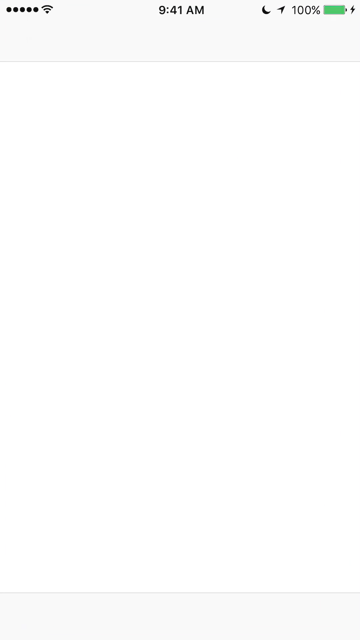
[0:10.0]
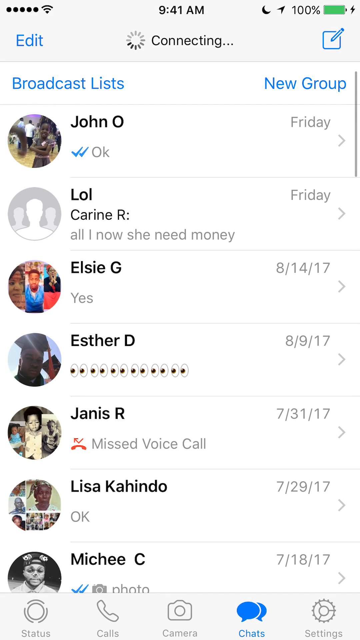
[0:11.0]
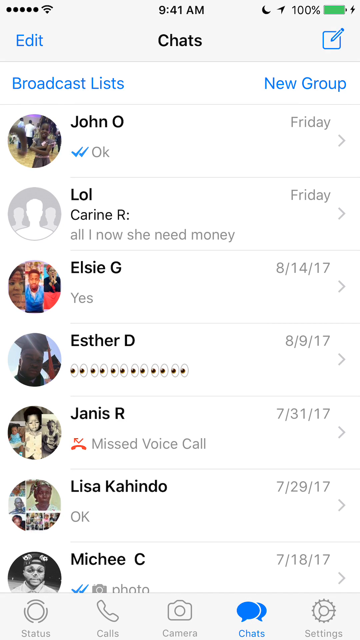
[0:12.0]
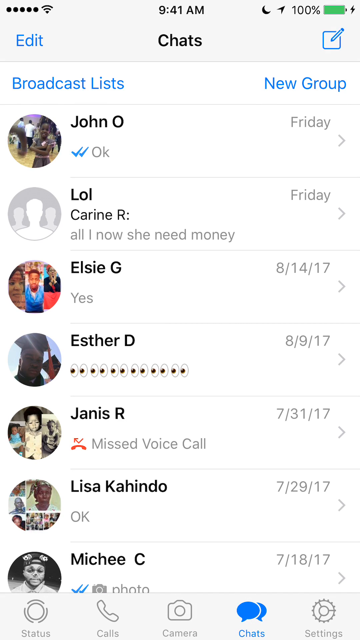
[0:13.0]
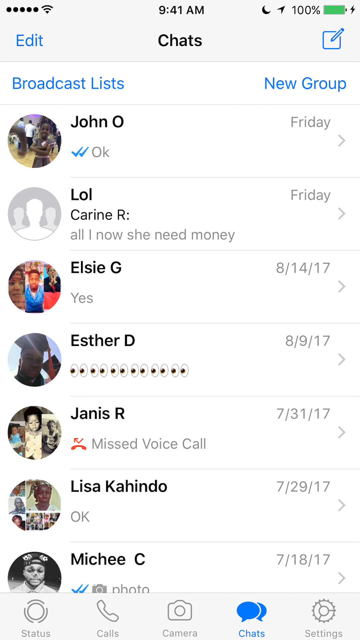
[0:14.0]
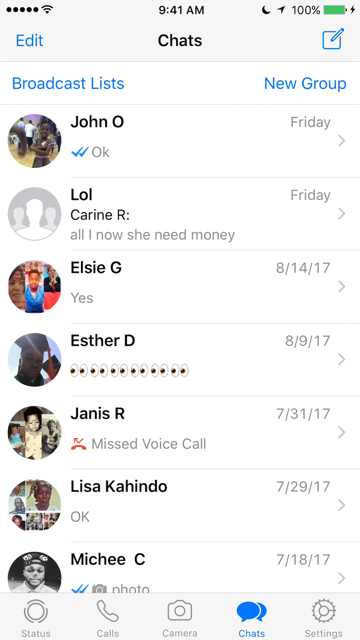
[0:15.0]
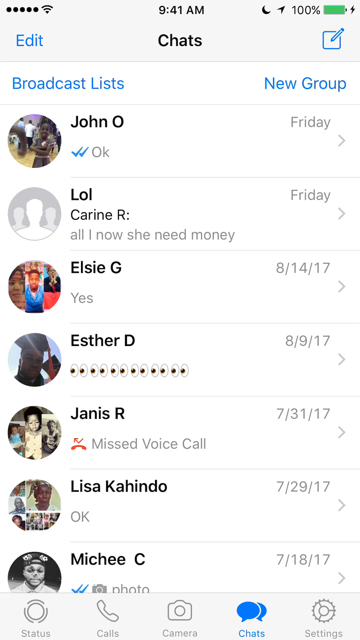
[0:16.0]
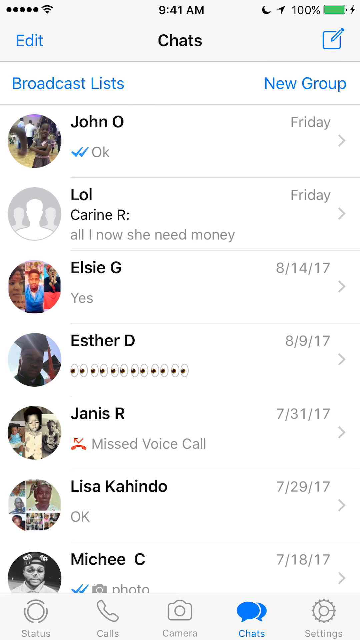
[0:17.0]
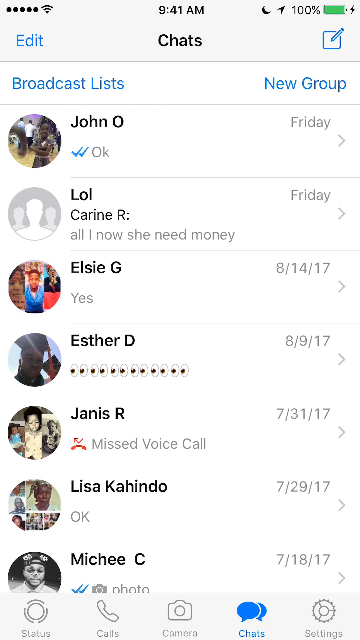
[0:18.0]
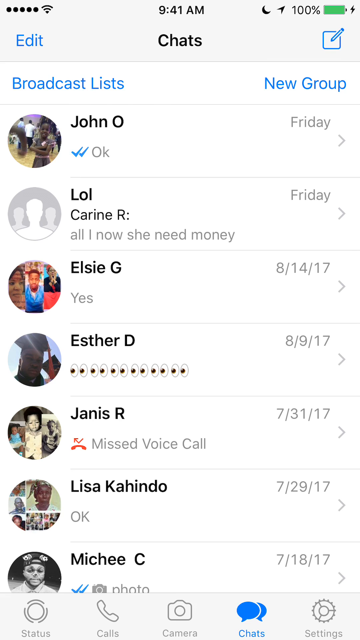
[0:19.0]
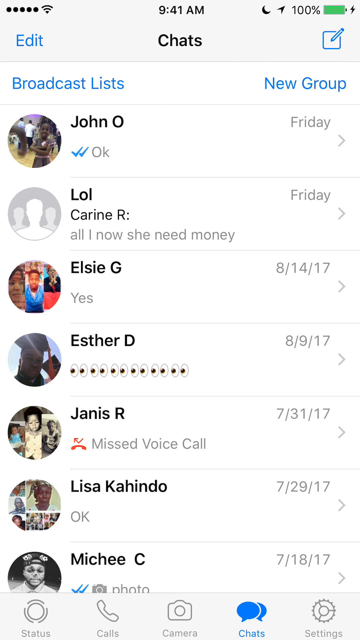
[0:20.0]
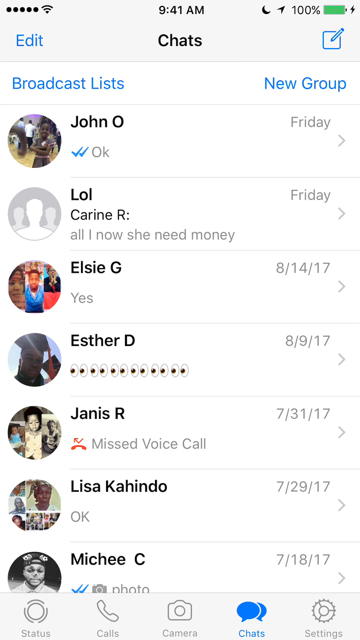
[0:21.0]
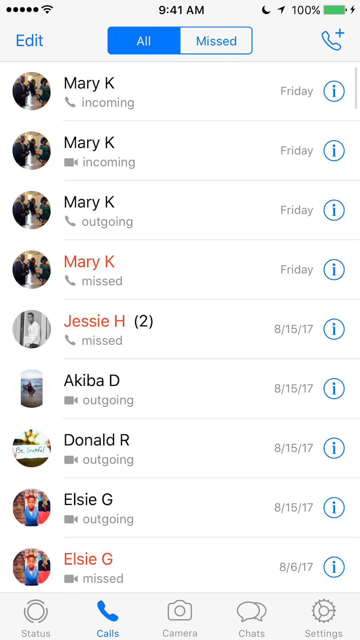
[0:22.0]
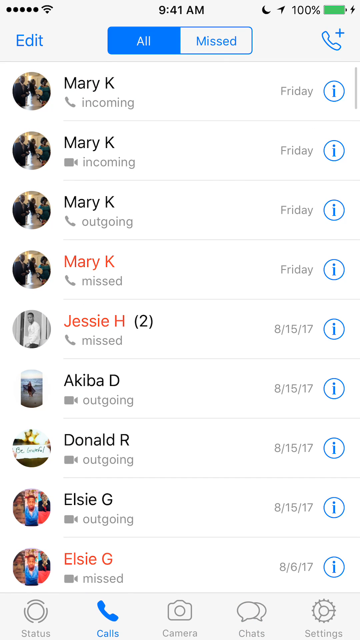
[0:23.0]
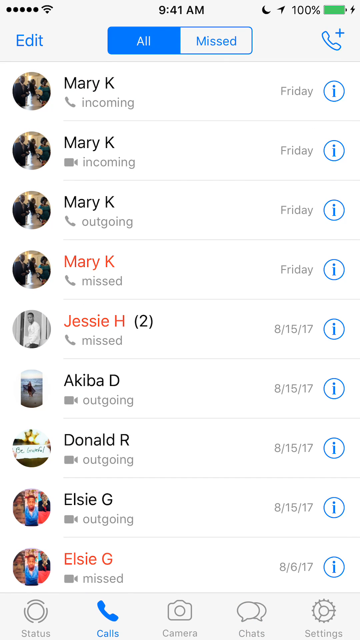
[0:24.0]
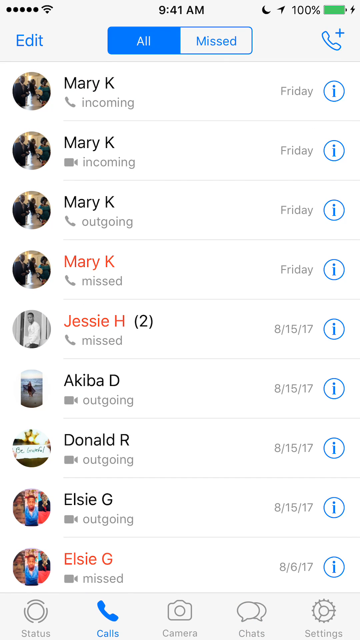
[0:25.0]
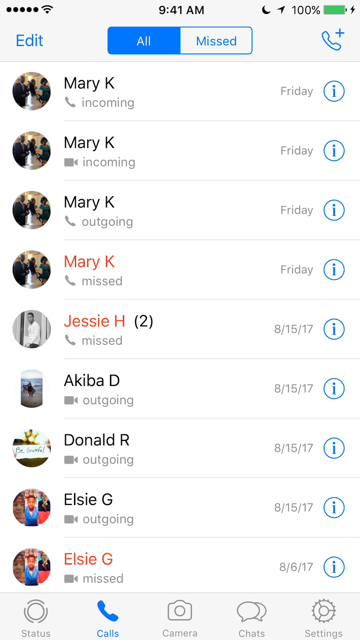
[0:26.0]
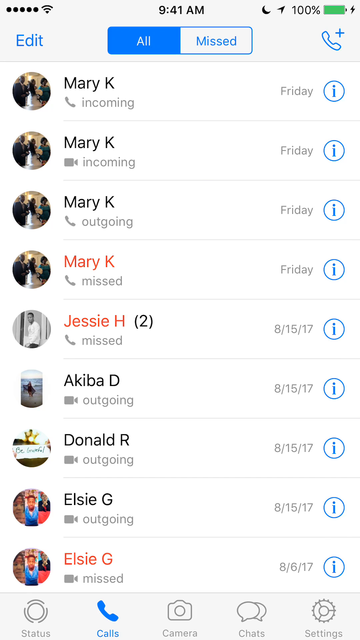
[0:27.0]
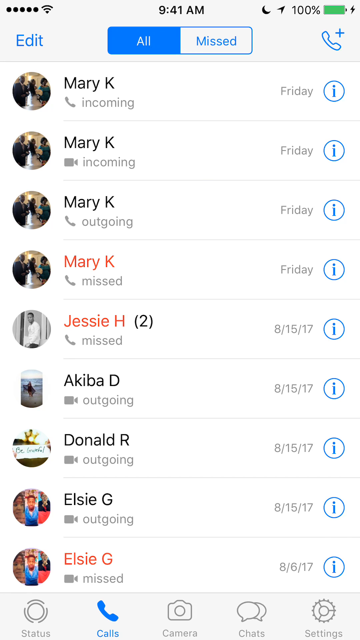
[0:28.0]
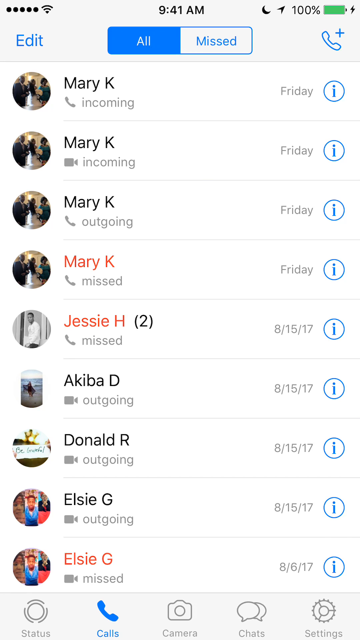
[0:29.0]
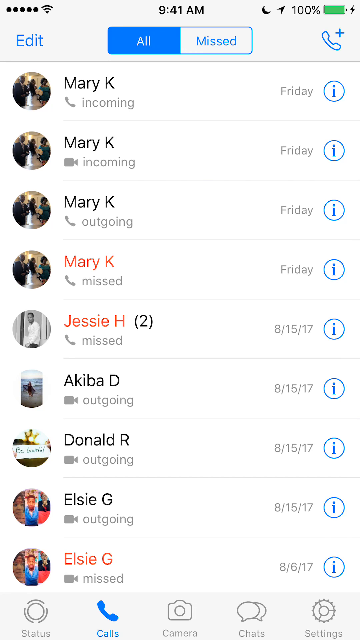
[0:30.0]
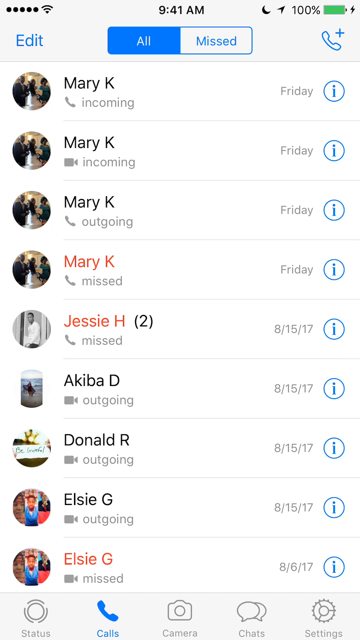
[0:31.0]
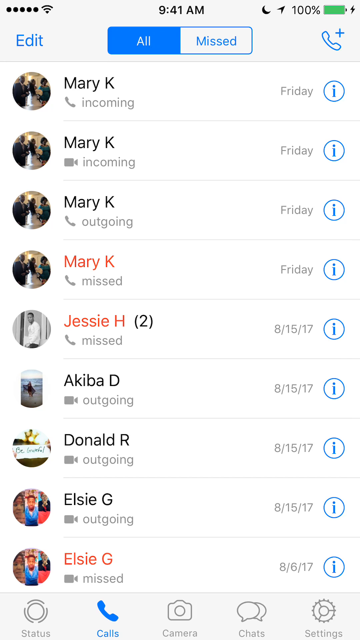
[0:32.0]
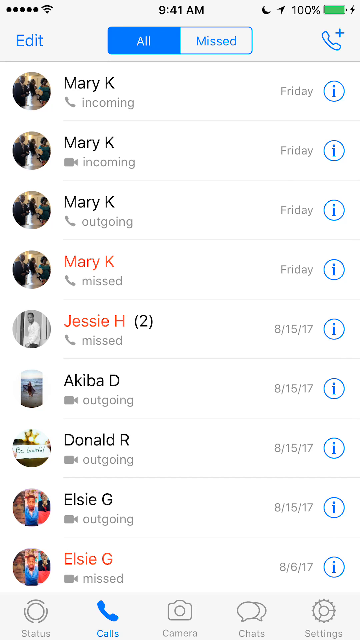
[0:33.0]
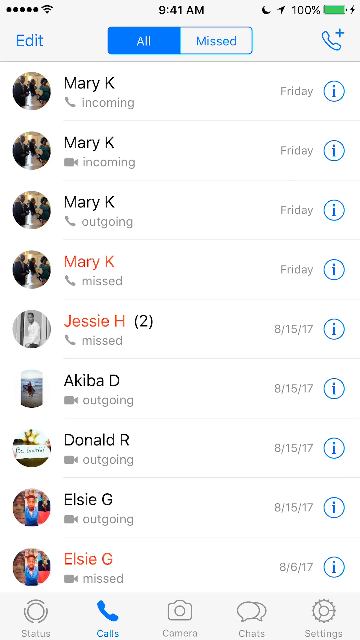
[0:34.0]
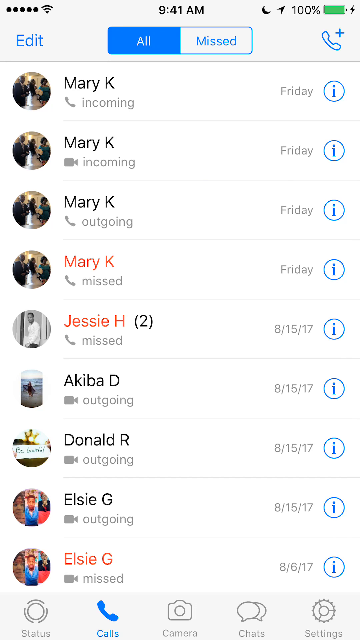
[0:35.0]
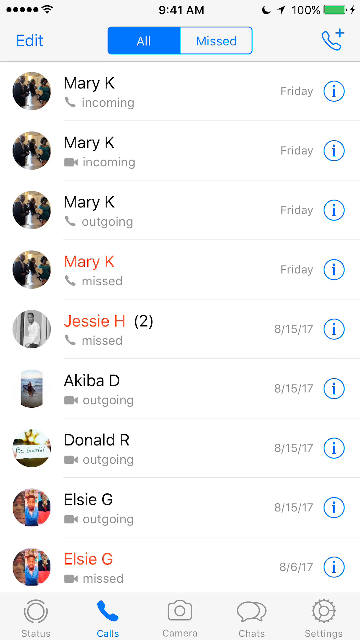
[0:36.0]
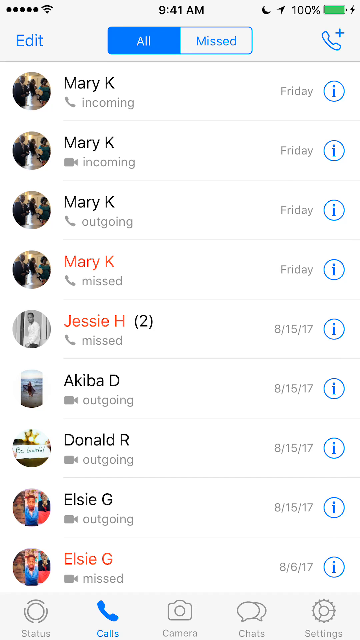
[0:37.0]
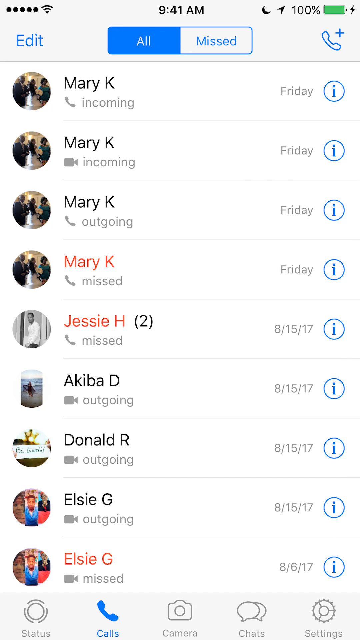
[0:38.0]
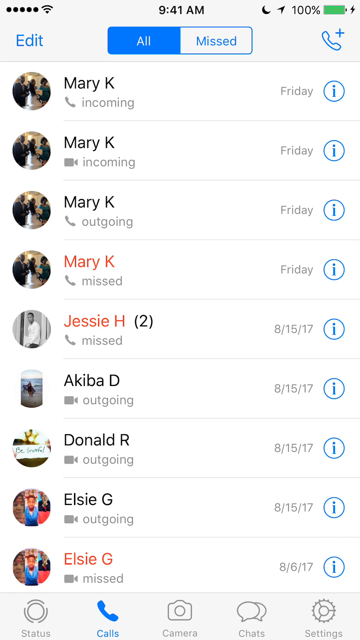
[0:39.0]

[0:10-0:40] A screen from an app appears, seemingly a calling app on an iPhone, showing a list of names, each with a picture to its left. At the top is John O., with what looks like a call attempt on Friday noted on the right side. Below is a message from Corinne R. reading "all I know, she need money", with Friday on the right. Next is LCG with the message "yes" underneath and the date 8-14-17 on the right. Below that is Esther D. with six eyeball emojis and the date 8-9-17. Below Esther D. is a voice call from Janice R. dated 7-31-17, then Lisa Ahingdo with the message "OK" dated 7-29-17, then Michi C. with text for photo dated 7-18-17. At the bottom of the screen, icons sit in a gray box: a drawing of a camera in the center, a phone to its left, blue message boxes to its right, and two more icons at the far left and far right; the far-right one looks almost like a wheel and the far-left one looks like a microphone. The view then switches to a different screen. At the top is a box reading "all", highlighted in blue, and to its right a white box reading "missed", with a drawing of a phone on the right side. Below is a list of entries, each with a picture to the left. The first four are for Mary Kay: the top two have the word "incoming" beneath the name, the third has "outgoing", and the fourth has "missed" with Mary Kay in red; all occurred on Friday. Next is Jessie H, a missed call dated 8-15-17, then Akiba D with "outgoing" beneath and 8-15-17 on the right, then Donald R, outgoing, 8-15-17, then Elsie G, outgoing, 8-15-17. Below is another Elsie G entry with "missed" beneath and the name in red, with a date in August 2017 on the right. The same icons as on the previous screen appear at the bottom center on a white background; the far-left icon is the status icon and the far-right icon is the settings icon.